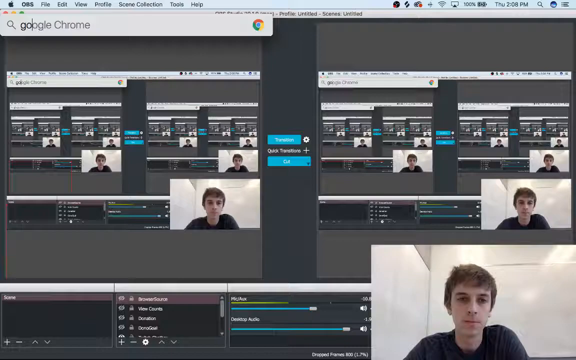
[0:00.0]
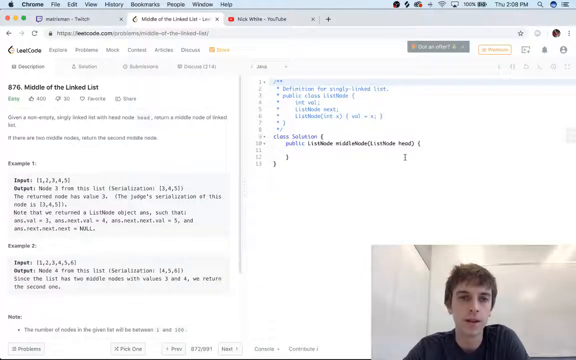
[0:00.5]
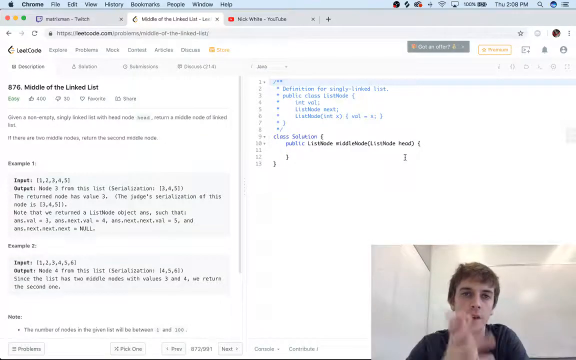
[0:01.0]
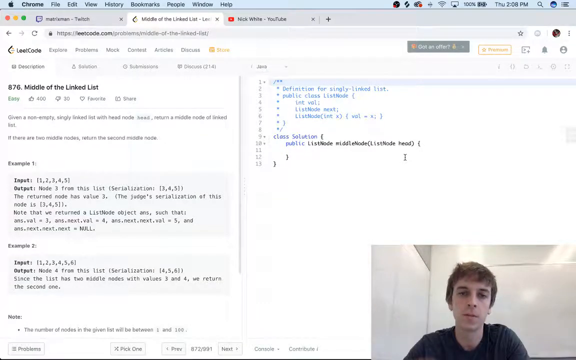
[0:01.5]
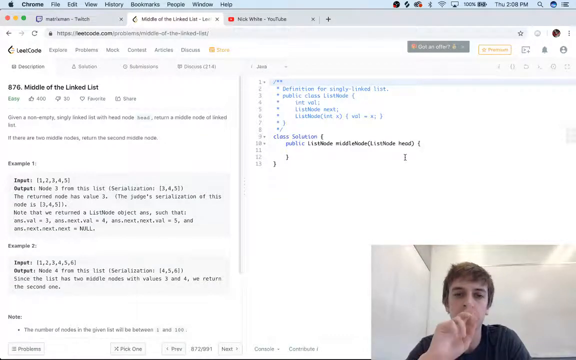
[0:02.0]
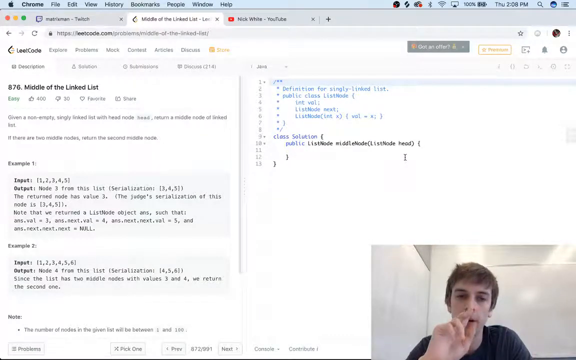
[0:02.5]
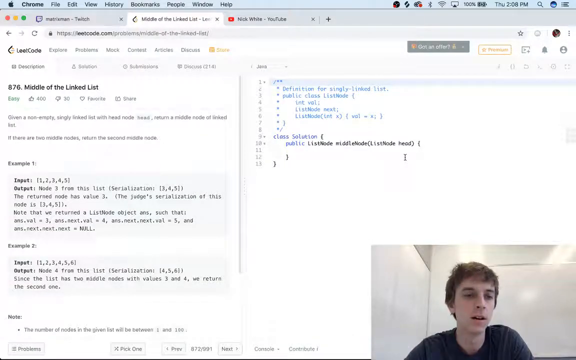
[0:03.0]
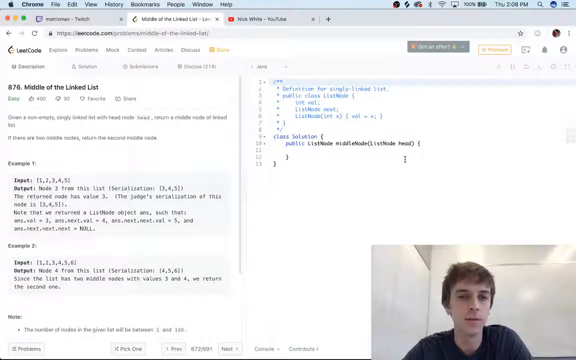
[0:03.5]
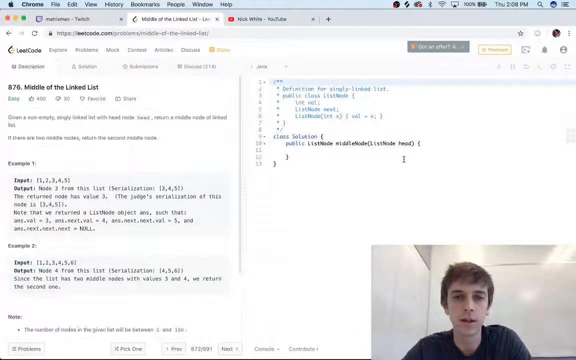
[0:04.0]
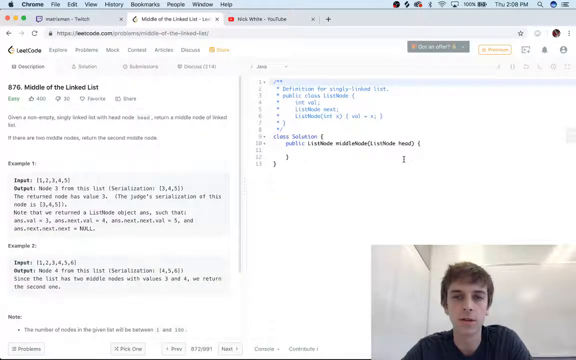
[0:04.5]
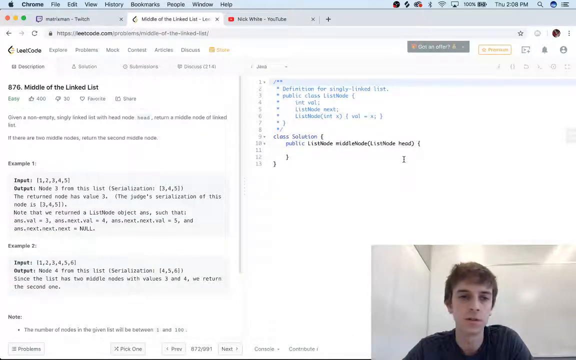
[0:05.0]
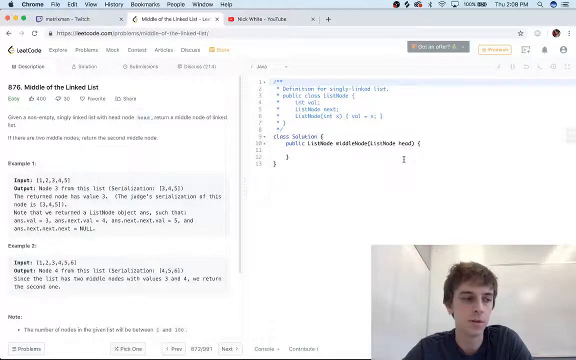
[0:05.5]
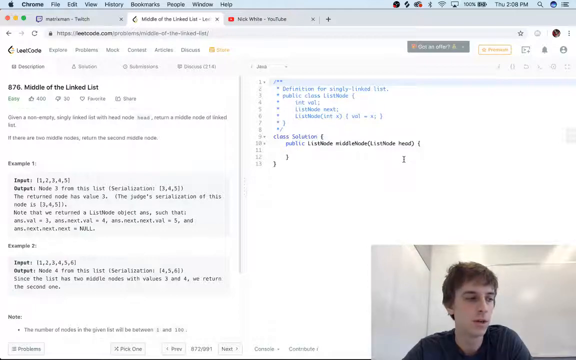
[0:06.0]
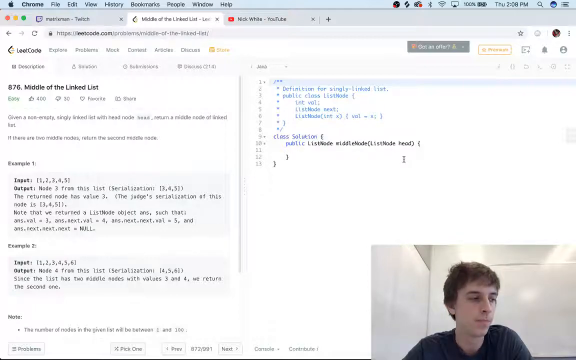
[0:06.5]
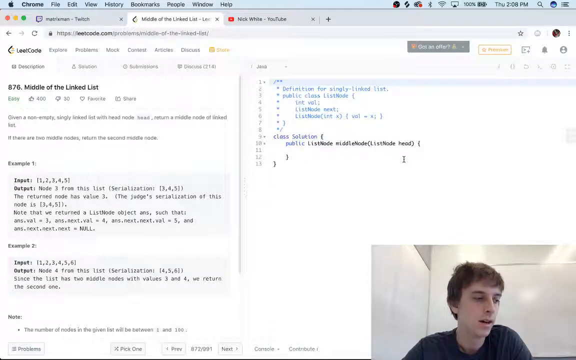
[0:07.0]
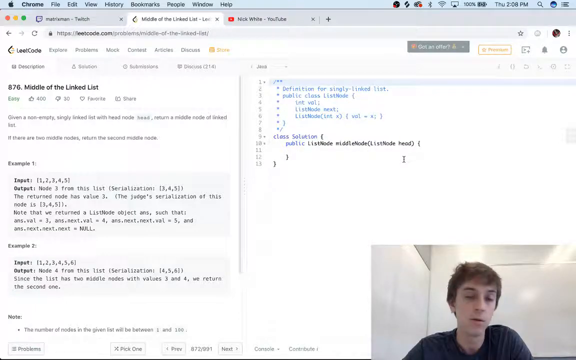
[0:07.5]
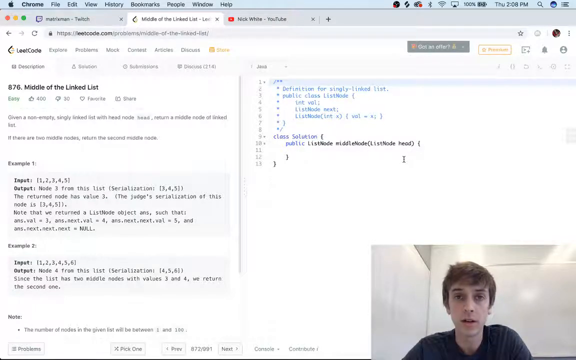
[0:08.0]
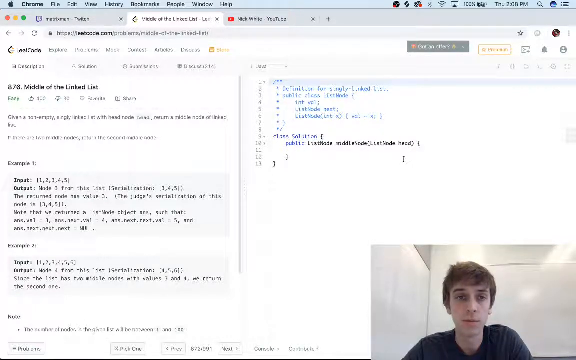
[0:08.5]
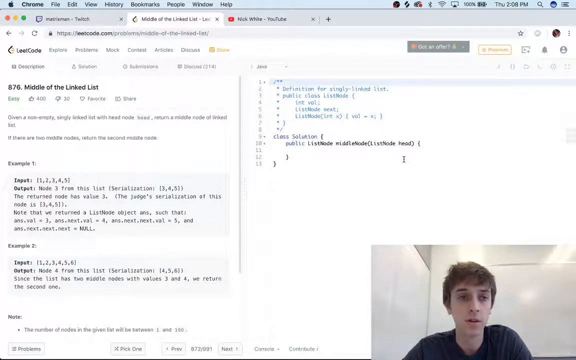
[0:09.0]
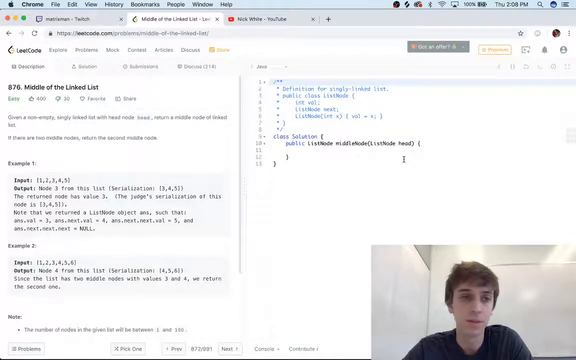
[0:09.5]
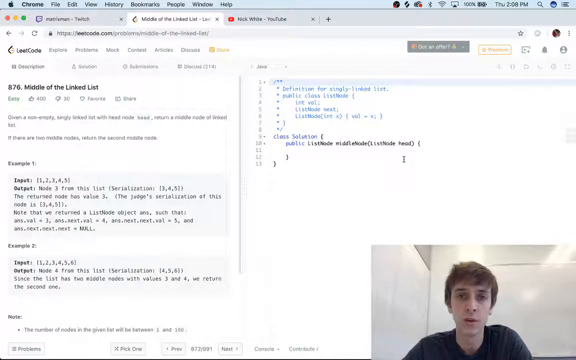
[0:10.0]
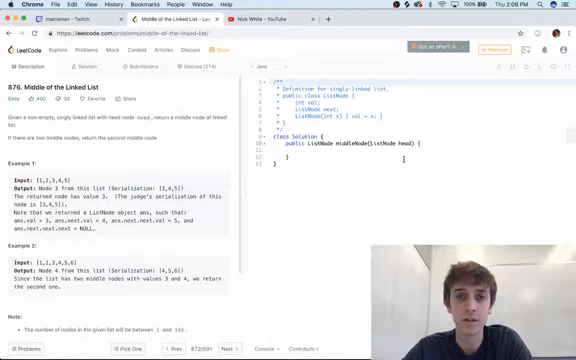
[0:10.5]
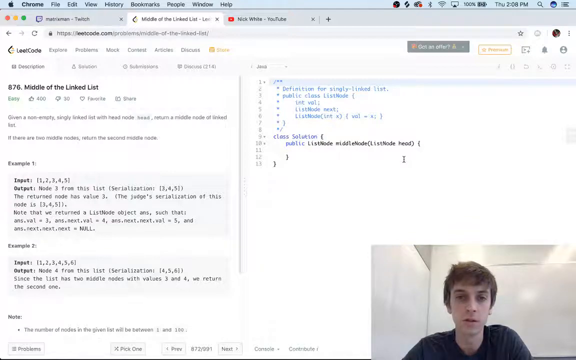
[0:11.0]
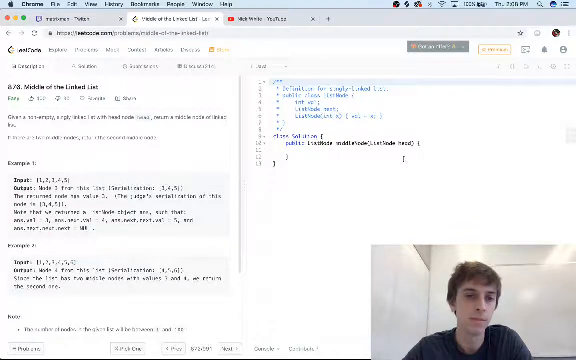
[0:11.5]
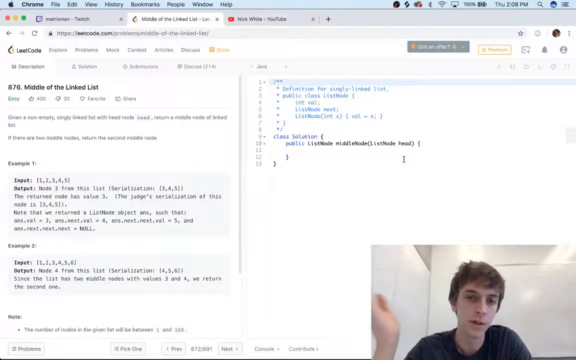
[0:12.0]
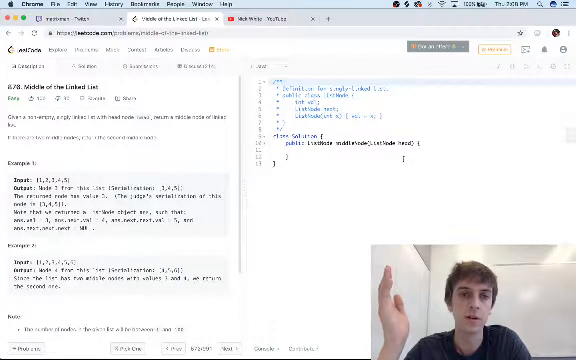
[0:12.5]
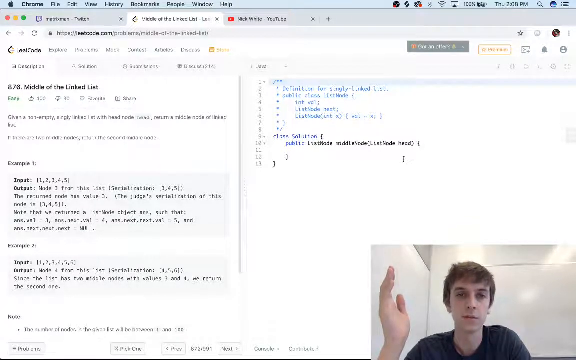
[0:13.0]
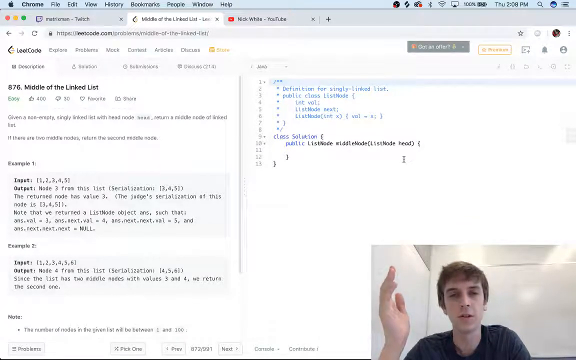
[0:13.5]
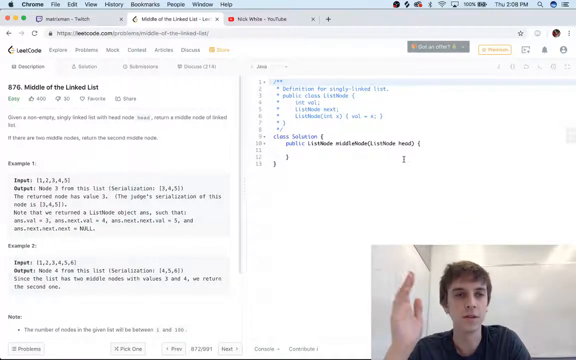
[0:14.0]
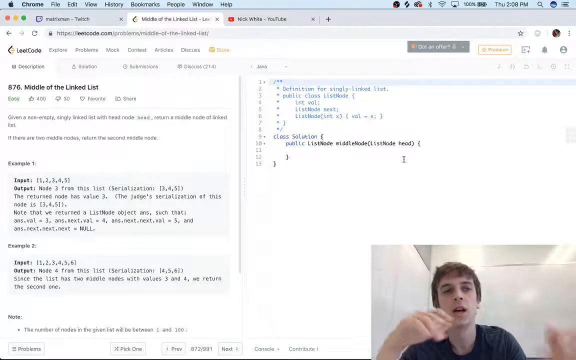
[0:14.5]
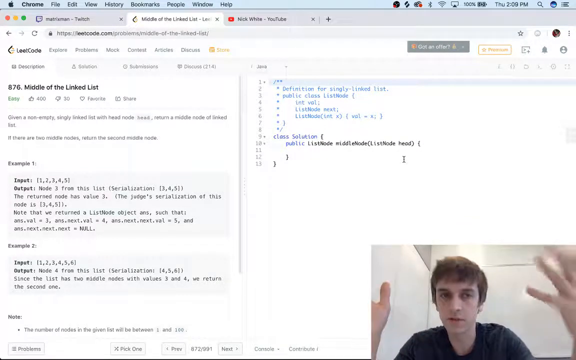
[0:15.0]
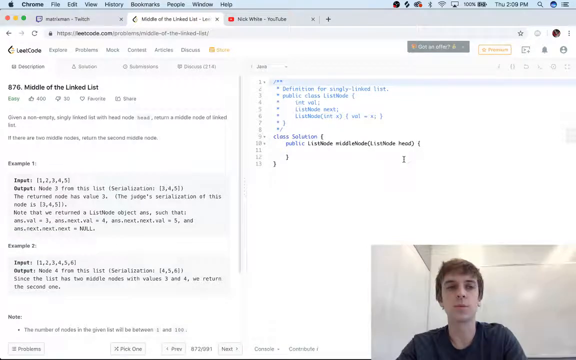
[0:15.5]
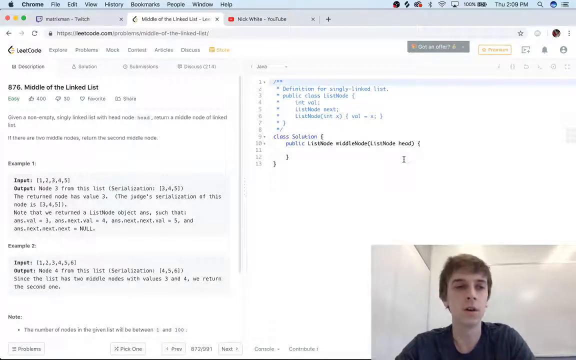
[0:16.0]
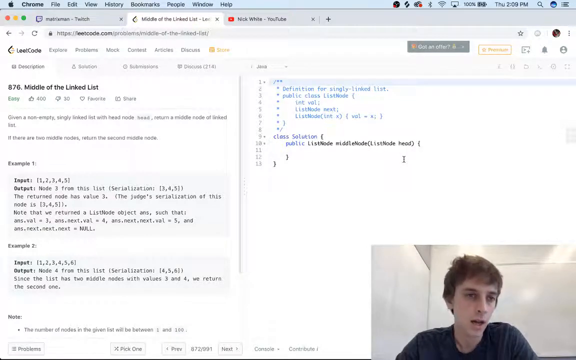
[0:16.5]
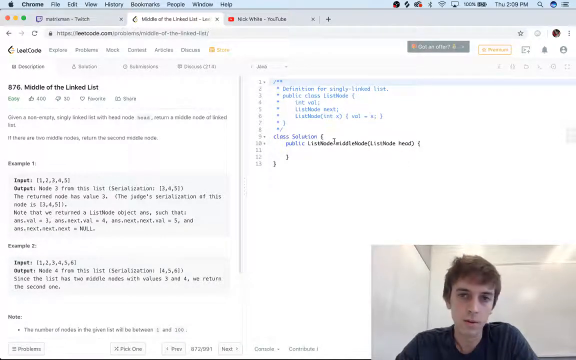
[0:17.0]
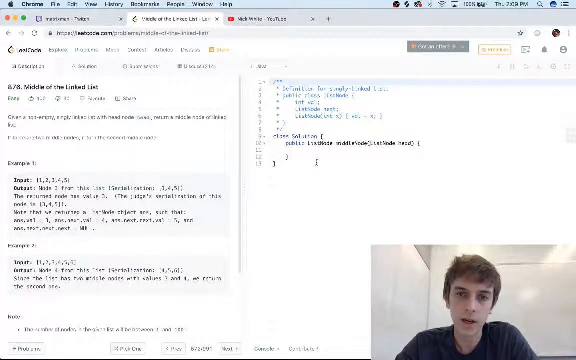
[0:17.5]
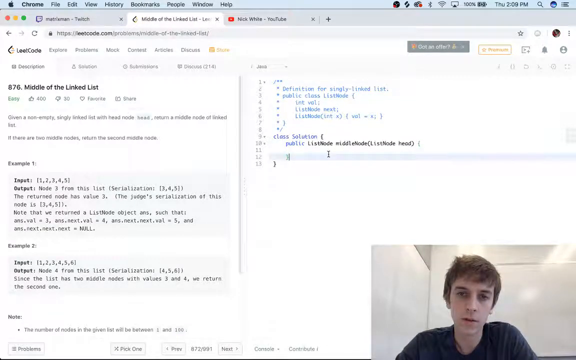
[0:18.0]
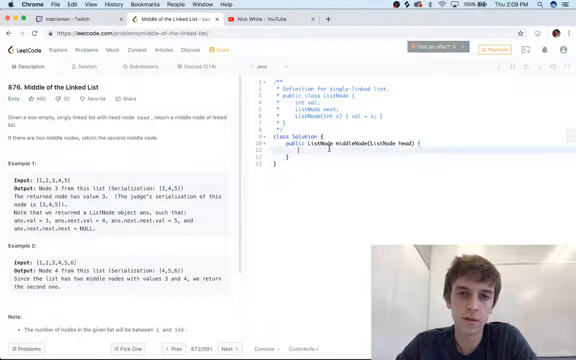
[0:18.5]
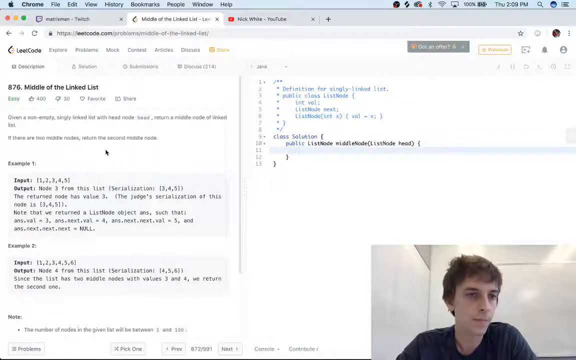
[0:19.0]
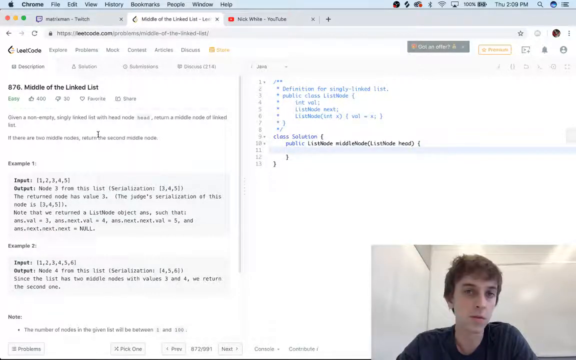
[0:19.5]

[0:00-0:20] The video begins by showing the speaker's recording software, which then changes to a Chrome tab with an education module open. The speaker is very animated and opens with a clap. He glances at his notes but makes strong eye contact, using hand gestures and body language that show interest in what he is talking about. Besides the module, the Chrome window has a Twitch channel tab and a YouTube tab open. The module is on LeetCode and is number 876, "middle of the linked list". It has 400 upvotes and 30 downvotes and appears to be an information module on coding with multiple examples.